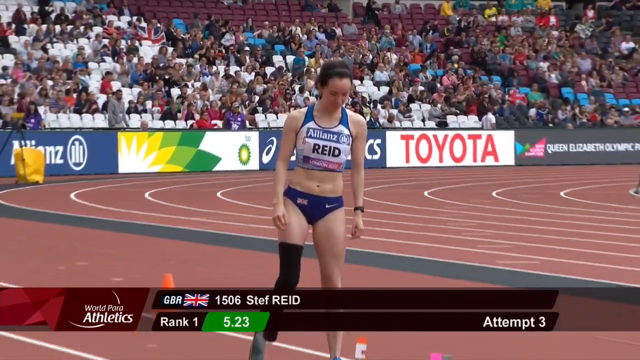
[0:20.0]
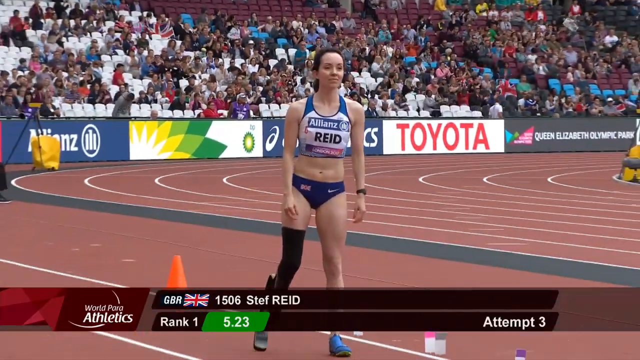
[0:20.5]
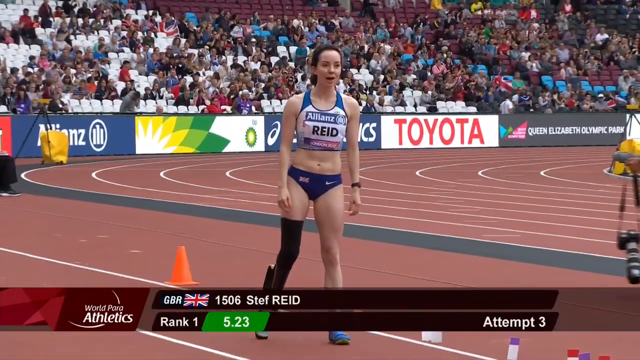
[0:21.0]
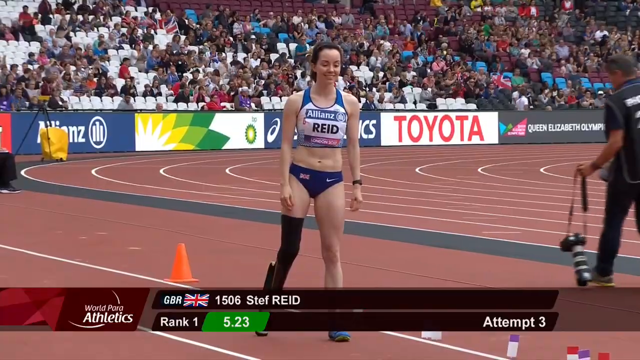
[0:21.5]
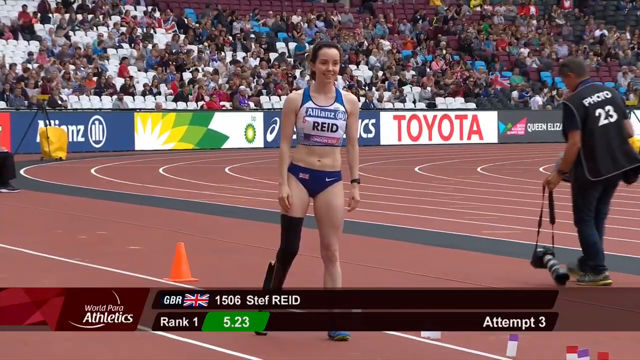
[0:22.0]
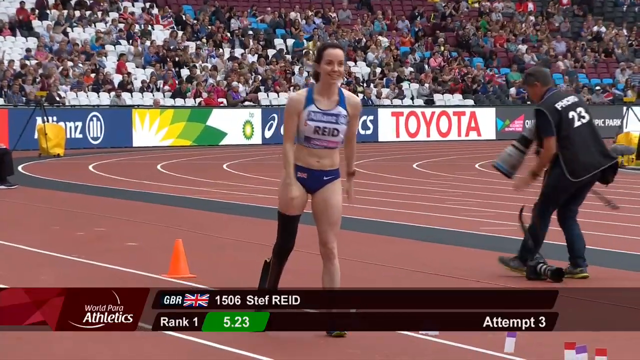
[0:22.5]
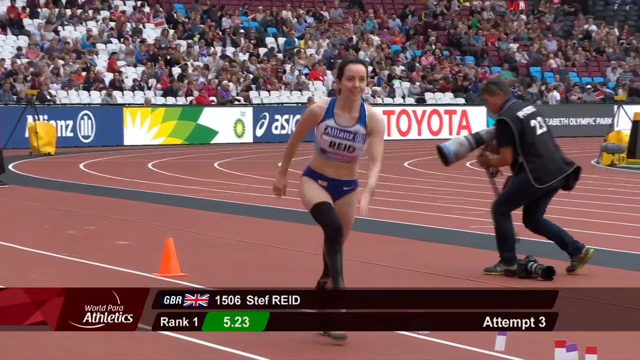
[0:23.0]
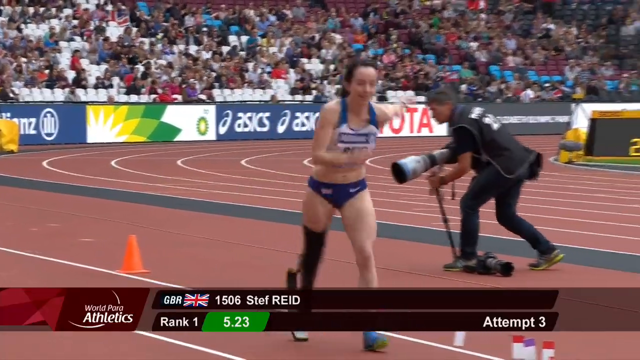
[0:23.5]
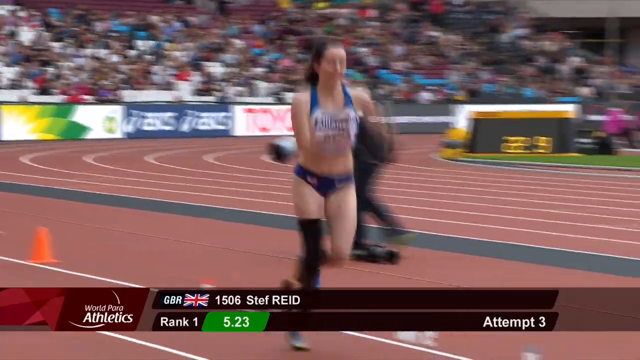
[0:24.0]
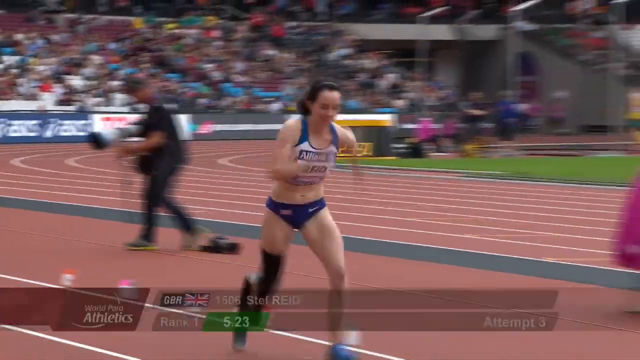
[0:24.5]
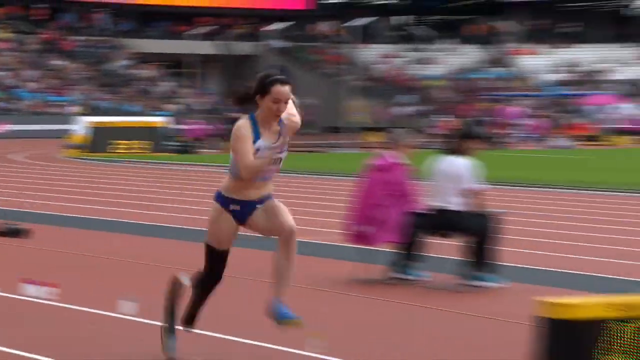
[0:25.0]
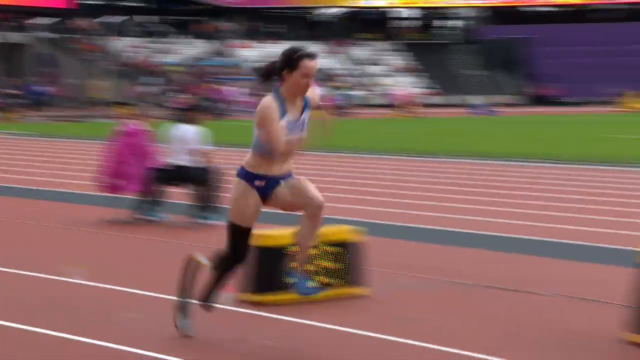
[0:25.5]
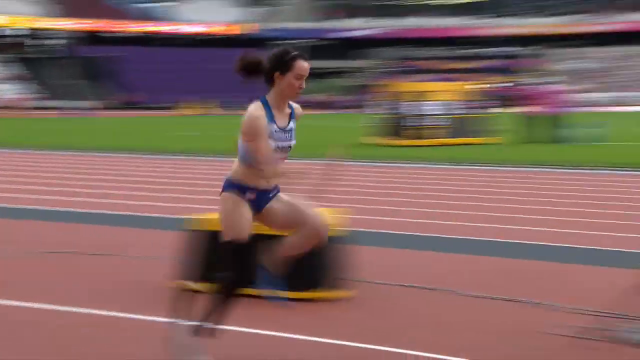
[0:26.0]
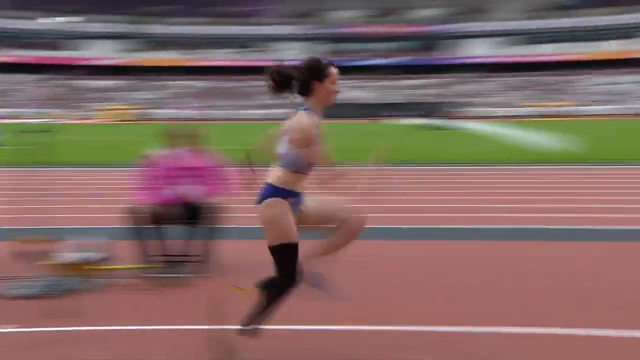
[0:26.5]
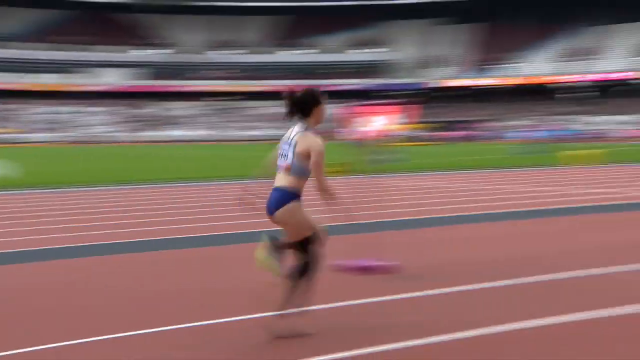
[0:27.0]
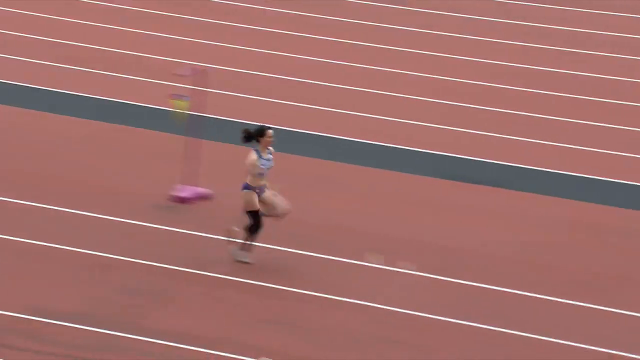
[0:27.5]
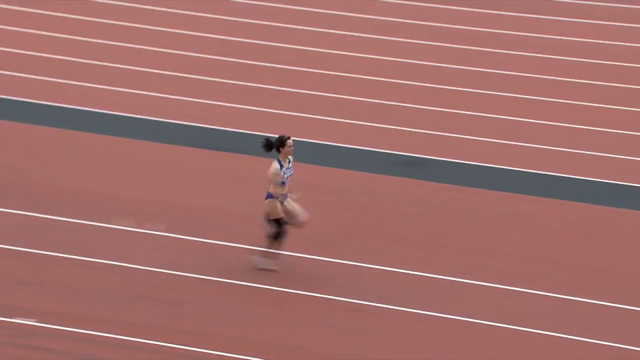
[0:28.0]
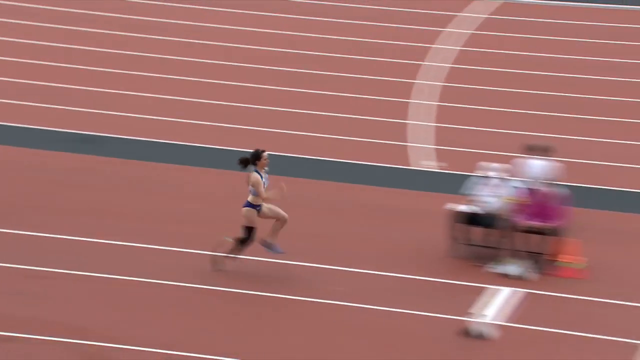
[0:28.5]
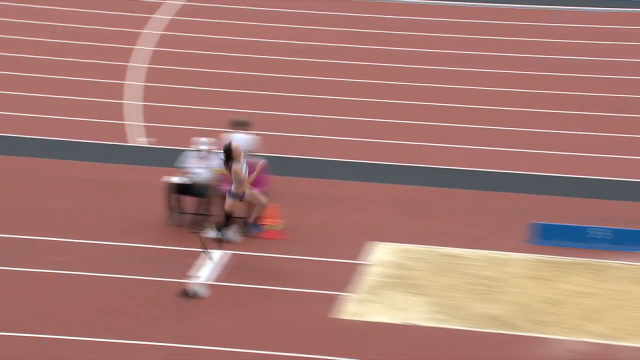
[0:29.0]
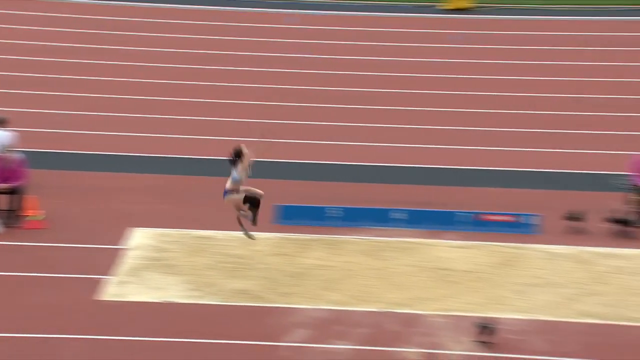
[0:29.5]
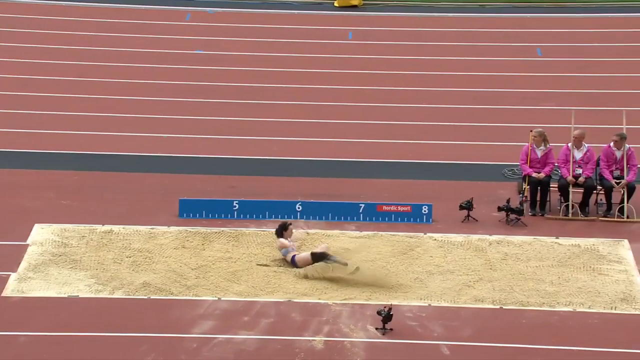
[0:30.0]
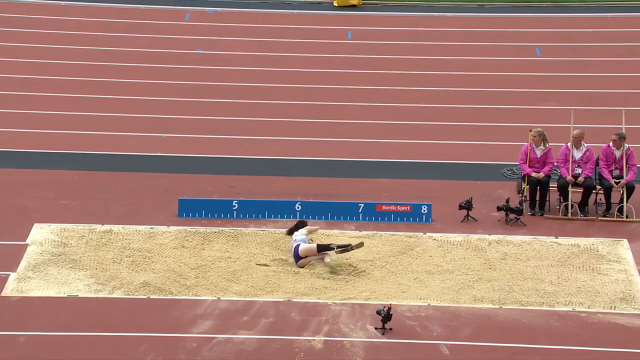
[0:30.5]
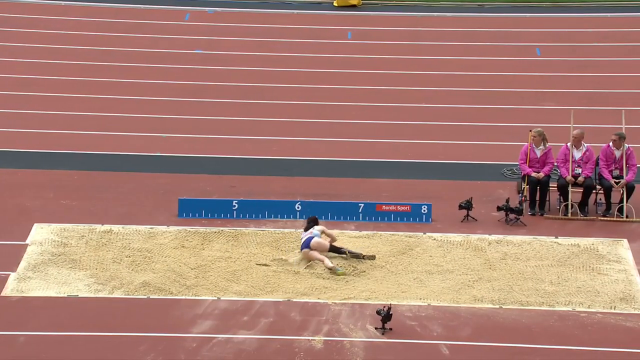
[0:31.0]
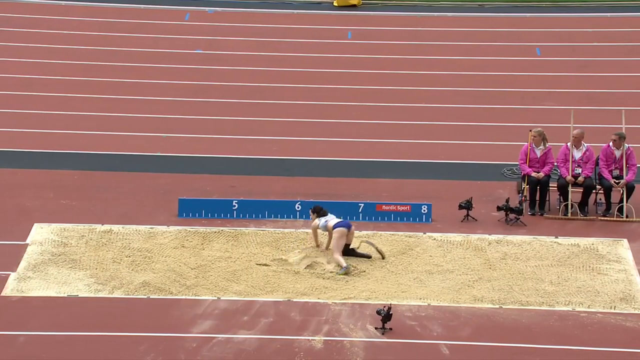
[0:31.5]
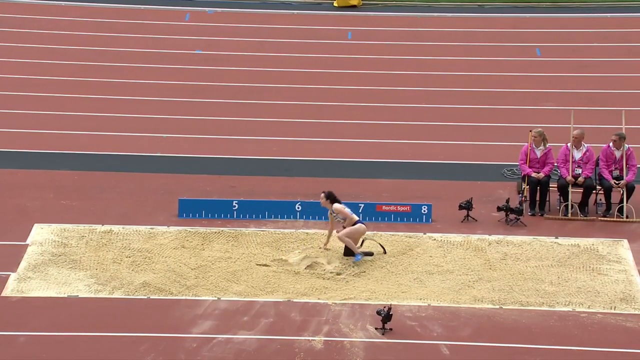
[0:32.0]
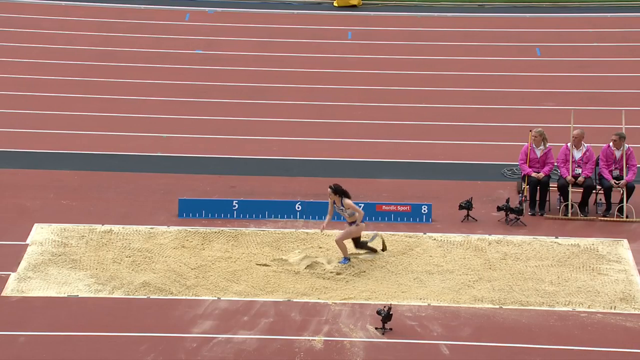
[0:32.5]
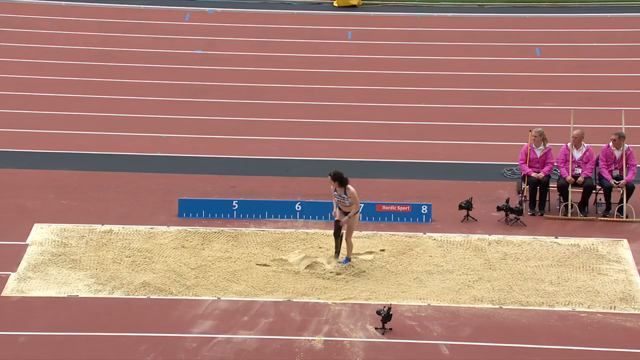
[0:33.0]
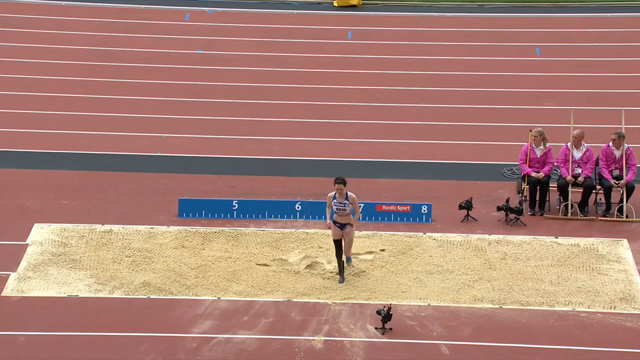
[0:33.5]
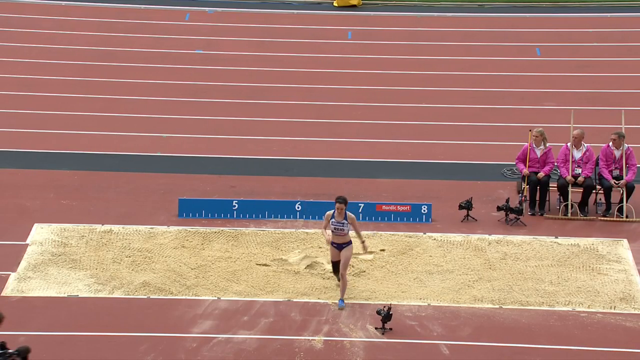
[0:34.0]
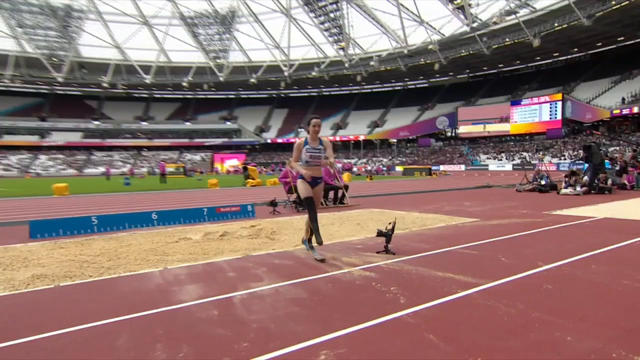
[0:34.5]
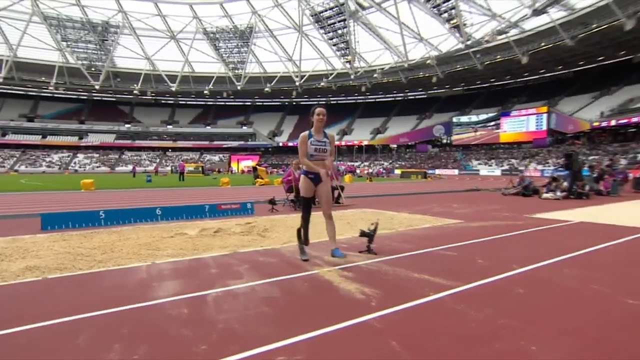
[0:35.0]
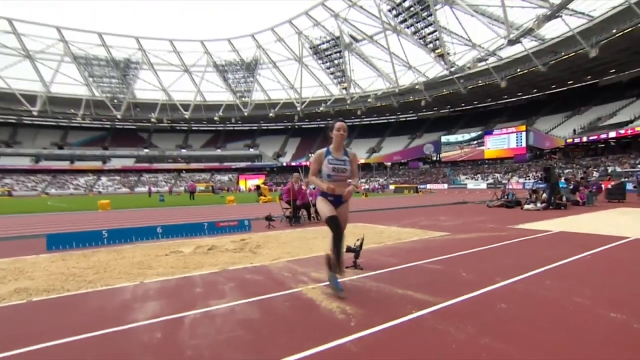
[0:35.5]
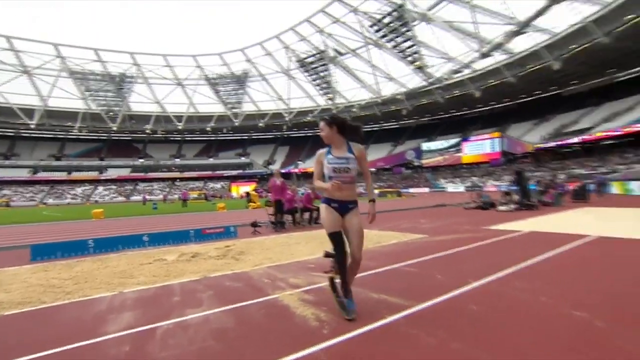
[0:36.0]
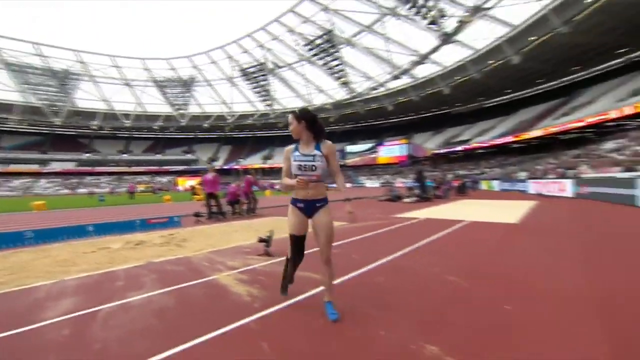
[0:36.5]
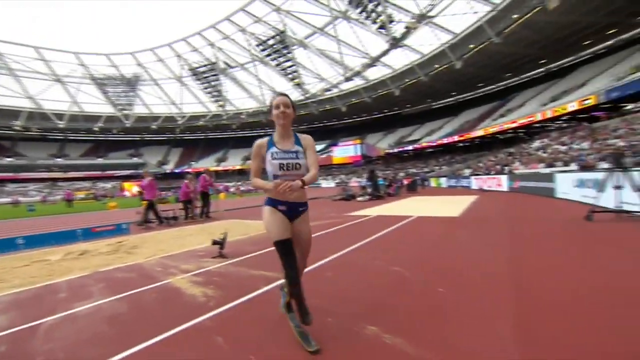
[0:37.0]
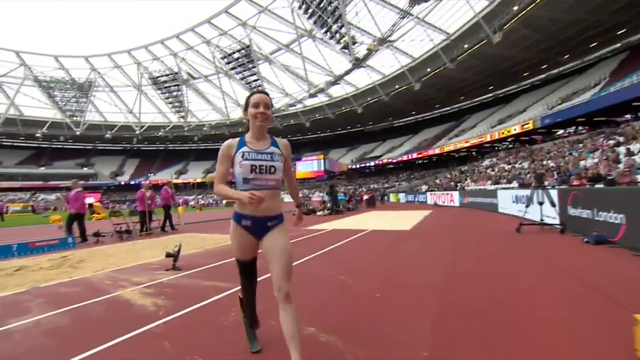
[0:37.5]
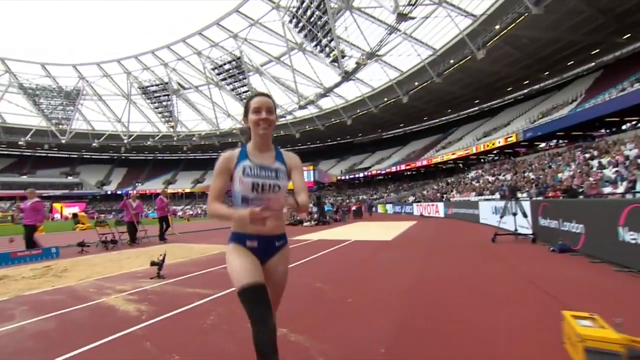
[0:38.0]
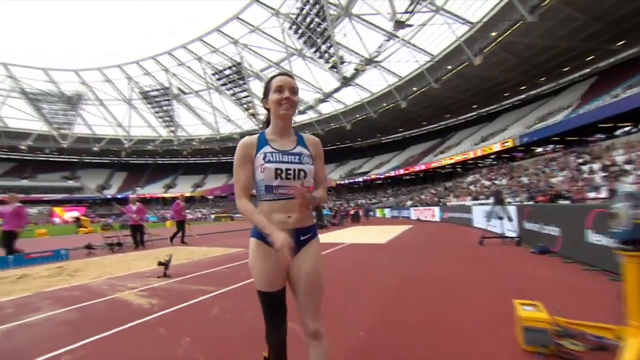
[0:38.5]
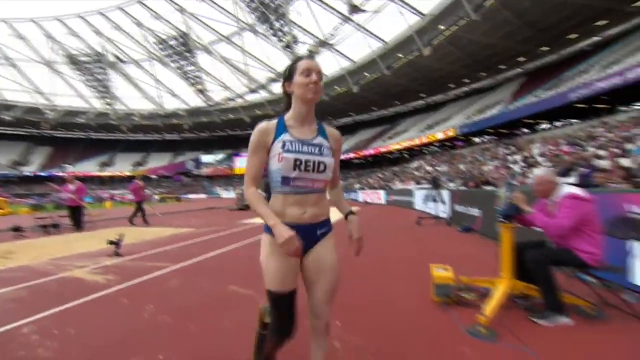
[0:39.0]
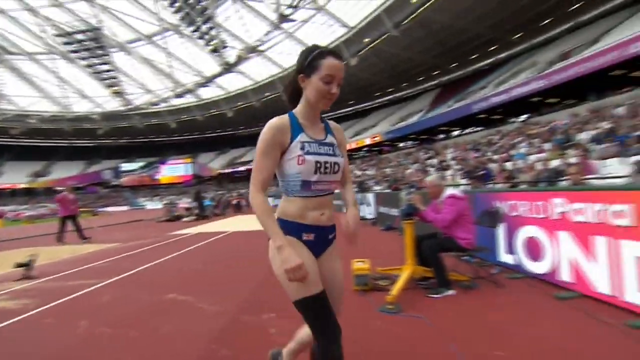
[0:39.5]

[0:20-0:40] On the track for the event, the woman has her feet in the starting blocks, then begins to run for the long jump. She has one leg and one artificial leg, with a black strap on the bottom part of her leg holding the artificial leg in place. Her arms wave and both legs are in motion as she runs. She reaches the block, steps onto it, jumps into the air, flies through the air and lands in the sand. Afterward she stands up and walks off to the side of the track. The event is probably the Paralympic Games.